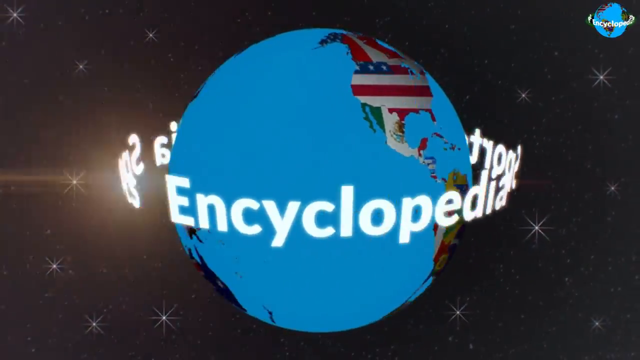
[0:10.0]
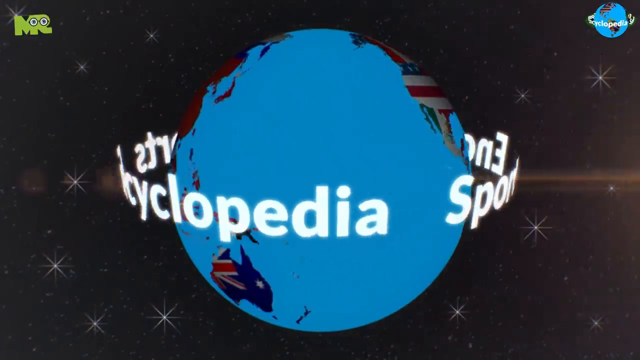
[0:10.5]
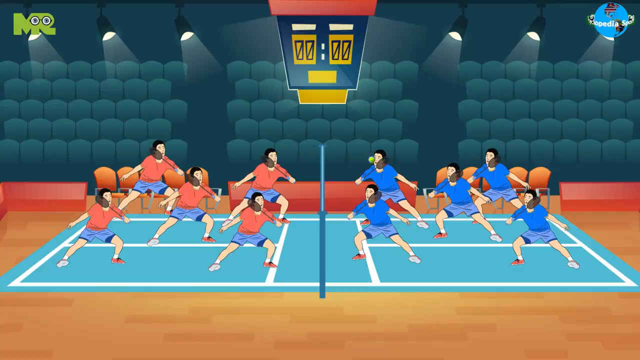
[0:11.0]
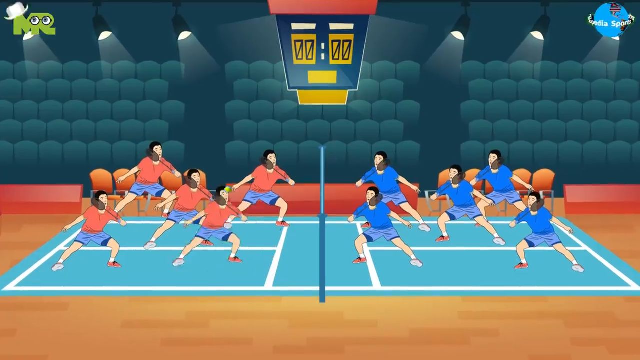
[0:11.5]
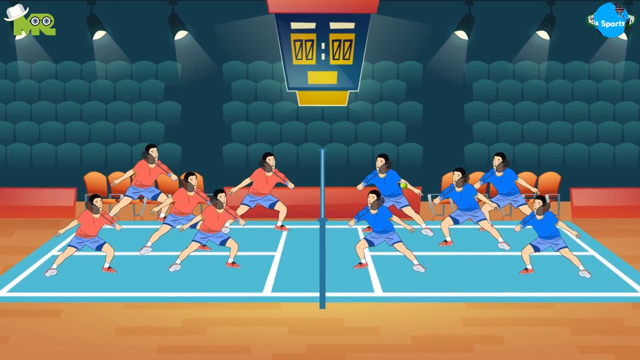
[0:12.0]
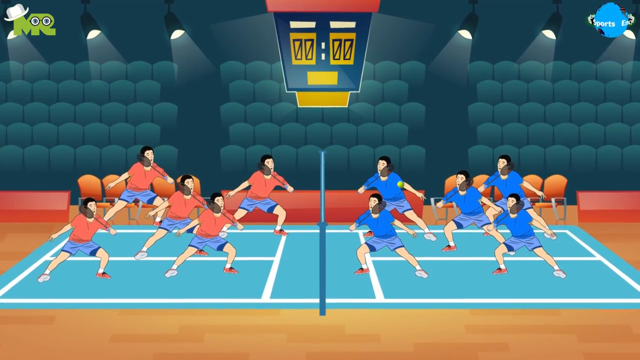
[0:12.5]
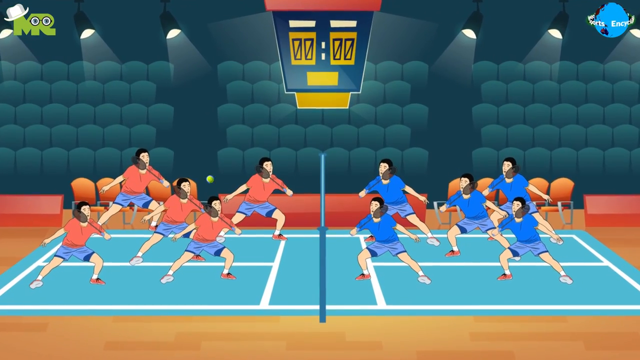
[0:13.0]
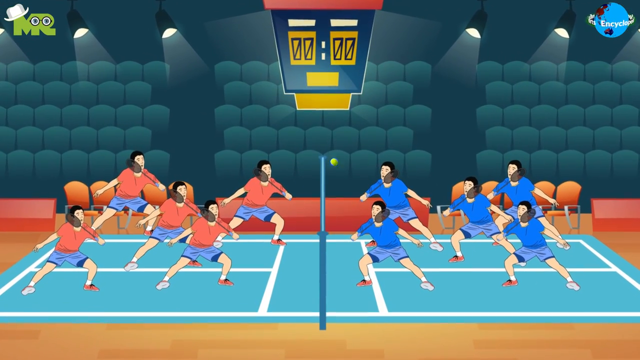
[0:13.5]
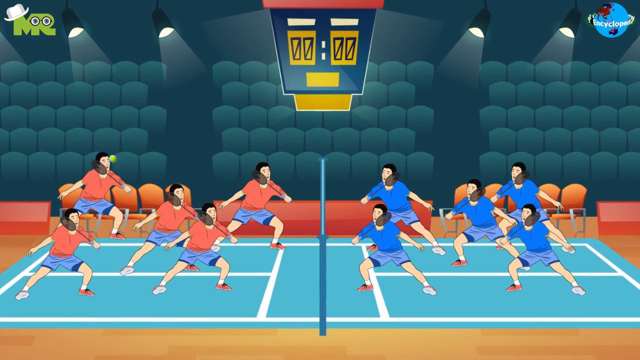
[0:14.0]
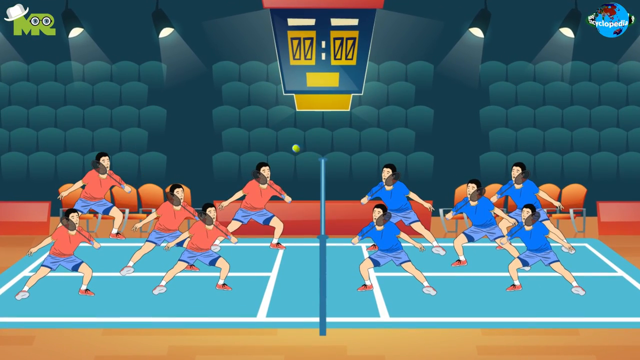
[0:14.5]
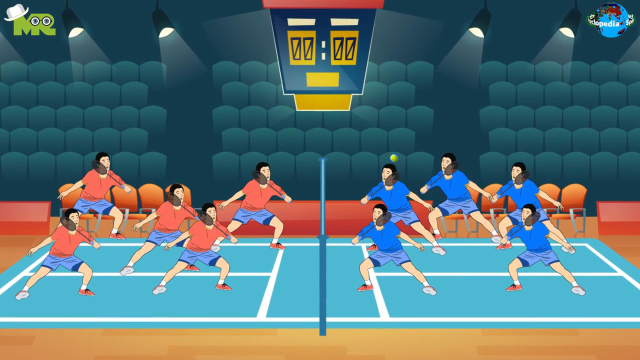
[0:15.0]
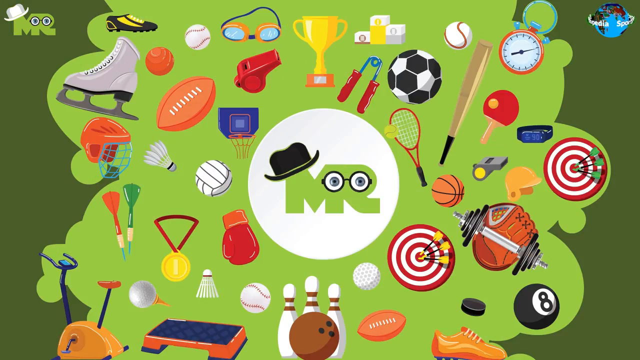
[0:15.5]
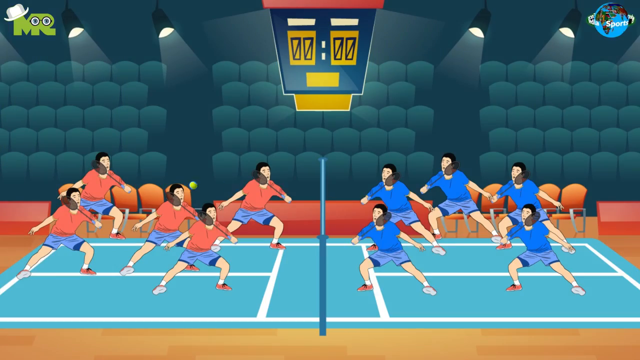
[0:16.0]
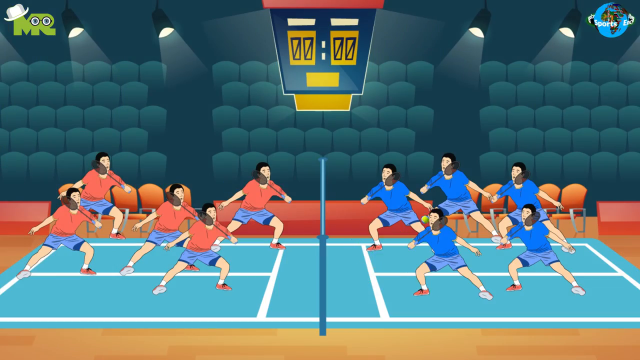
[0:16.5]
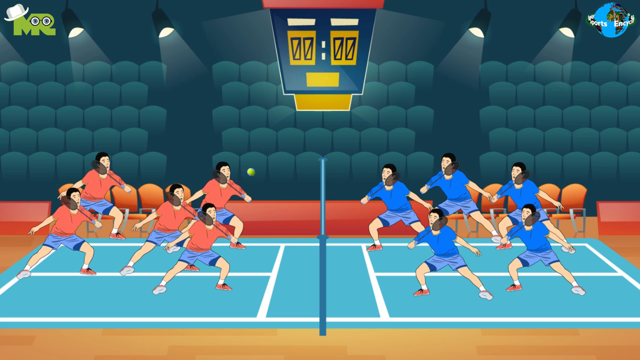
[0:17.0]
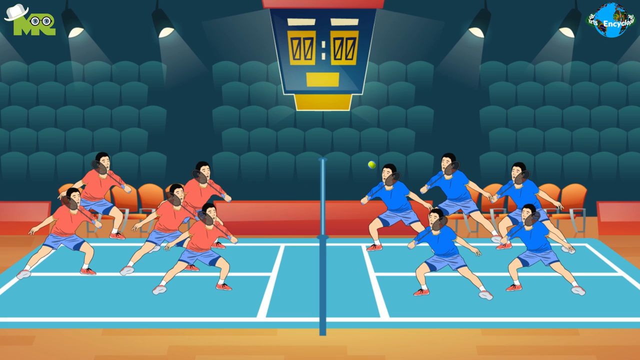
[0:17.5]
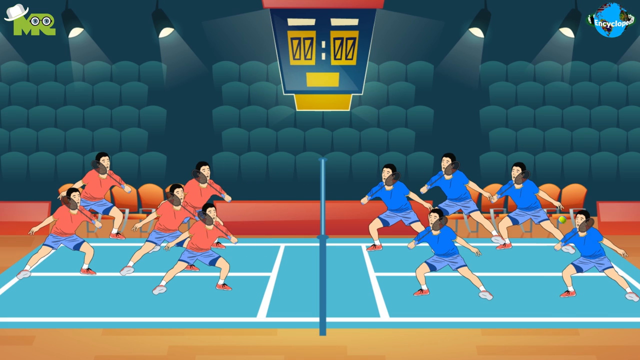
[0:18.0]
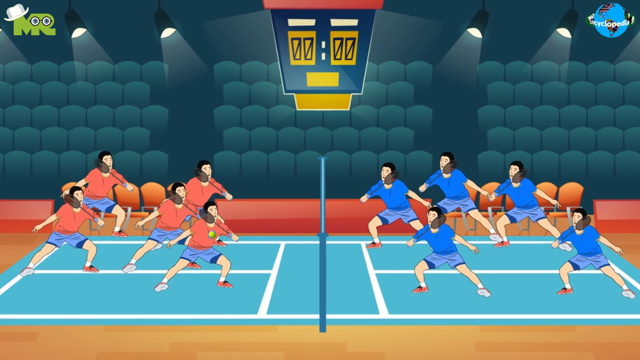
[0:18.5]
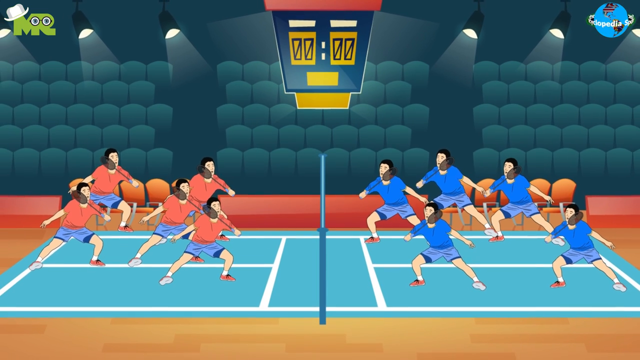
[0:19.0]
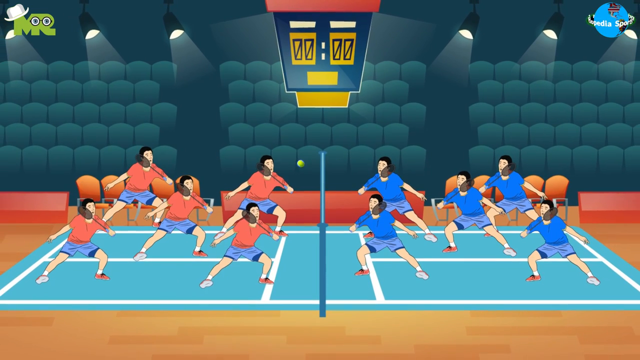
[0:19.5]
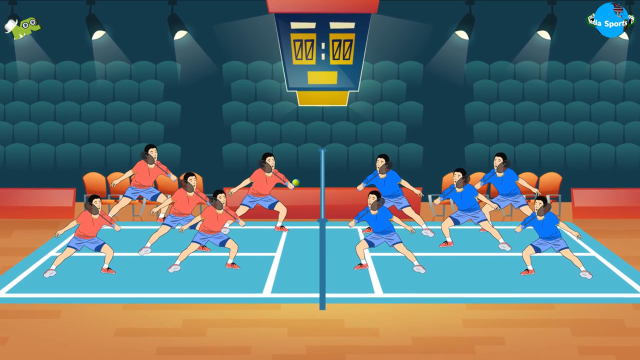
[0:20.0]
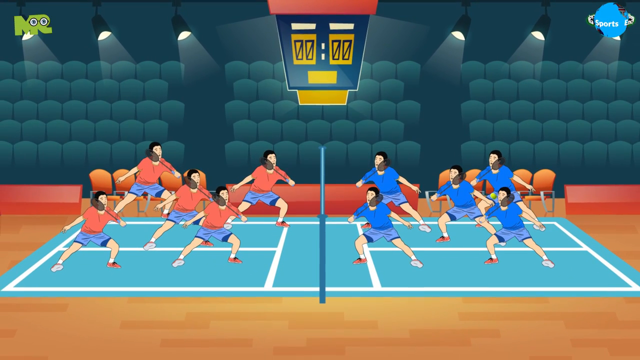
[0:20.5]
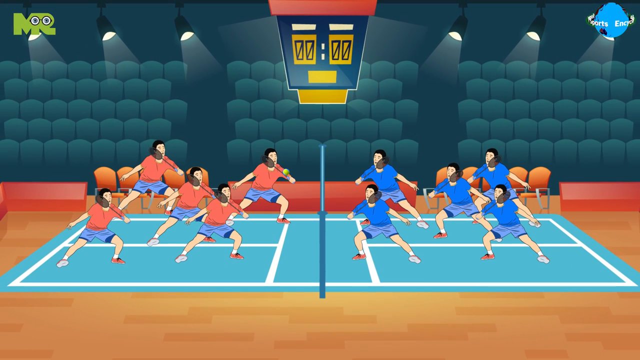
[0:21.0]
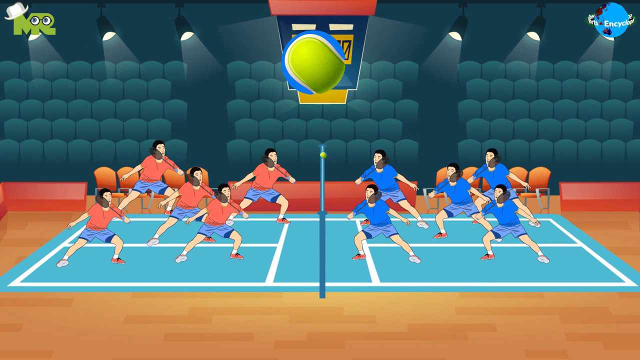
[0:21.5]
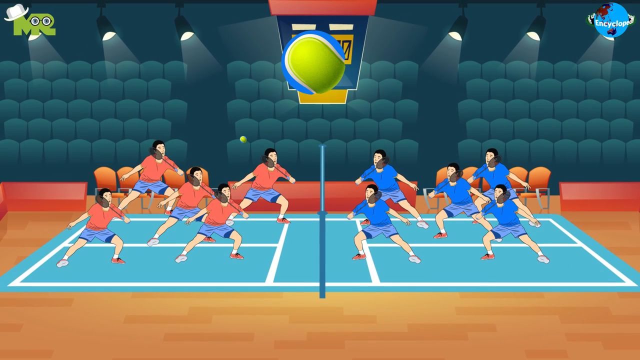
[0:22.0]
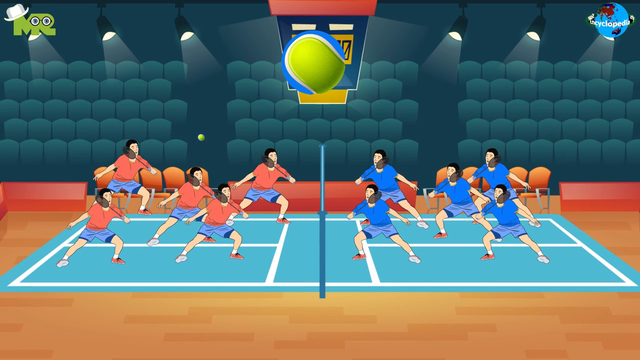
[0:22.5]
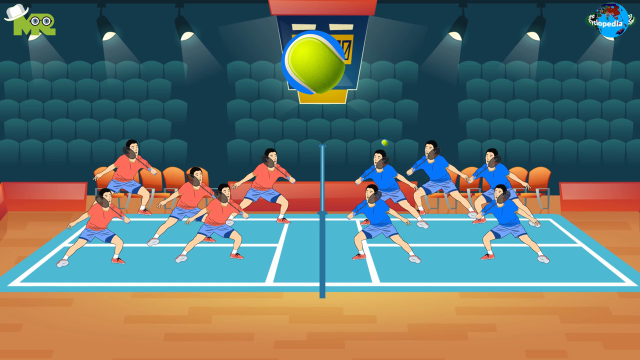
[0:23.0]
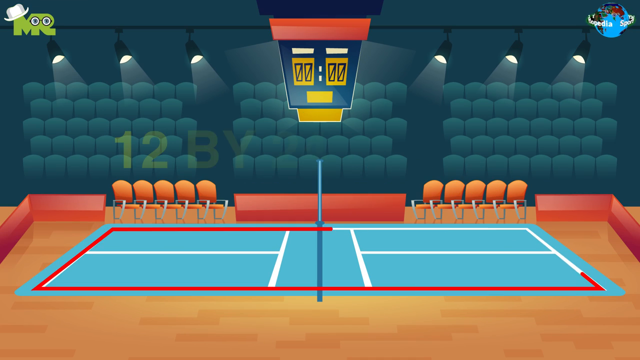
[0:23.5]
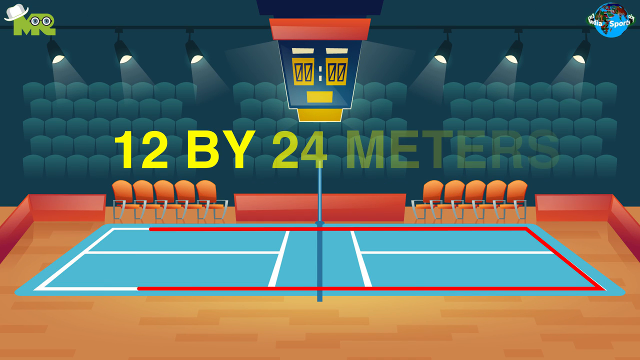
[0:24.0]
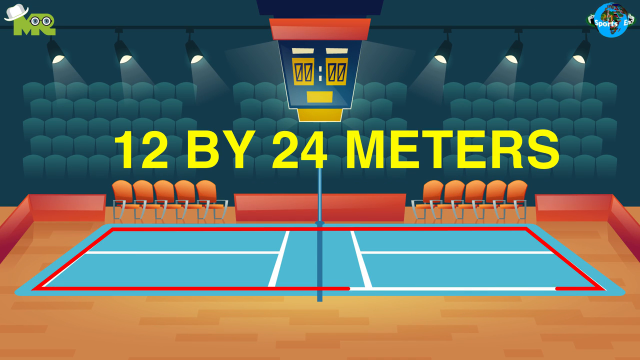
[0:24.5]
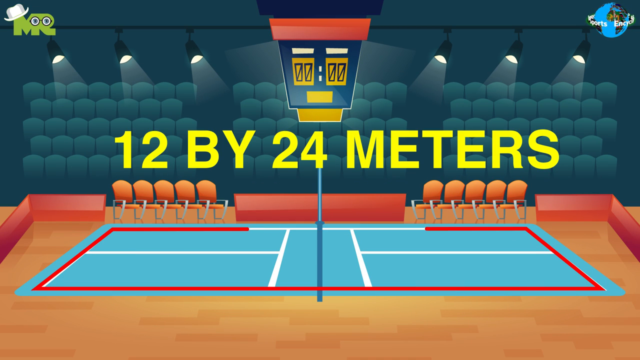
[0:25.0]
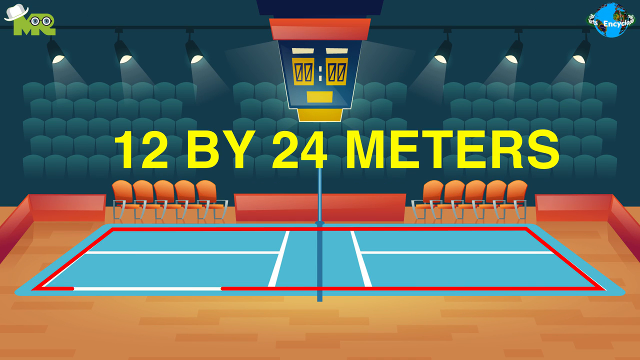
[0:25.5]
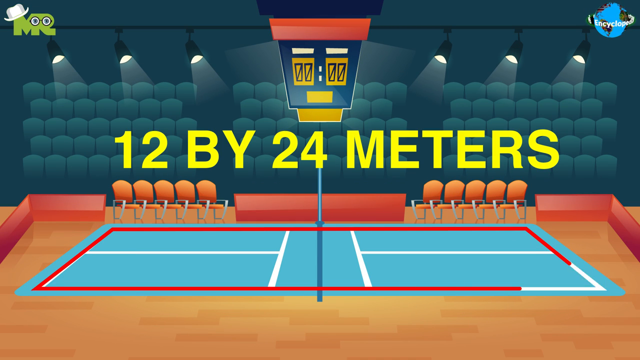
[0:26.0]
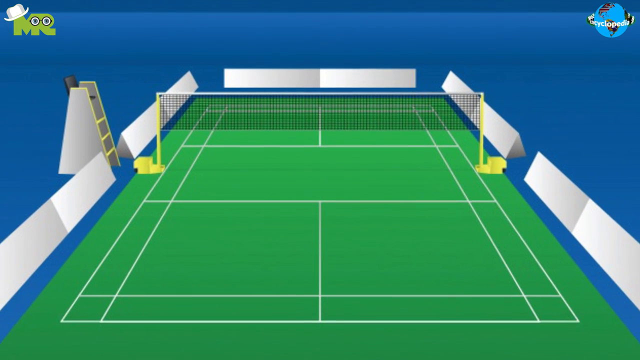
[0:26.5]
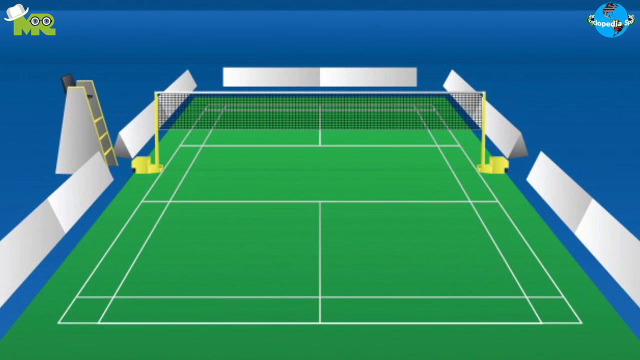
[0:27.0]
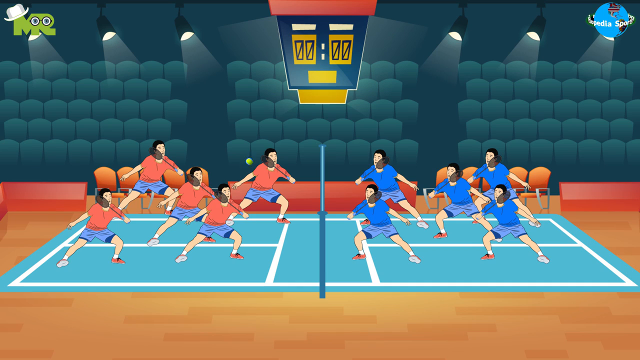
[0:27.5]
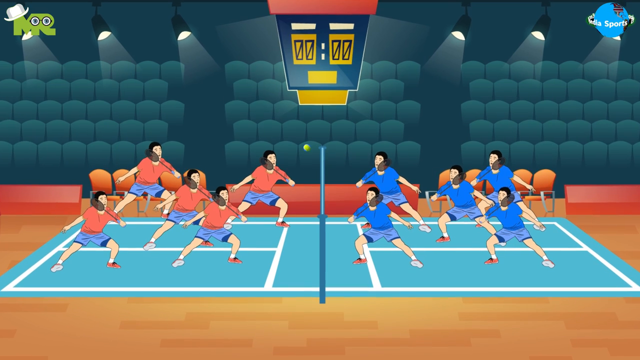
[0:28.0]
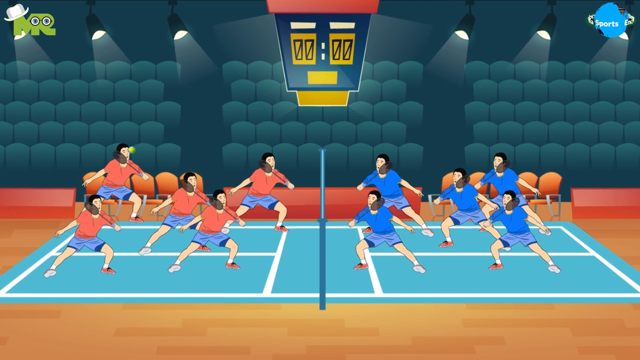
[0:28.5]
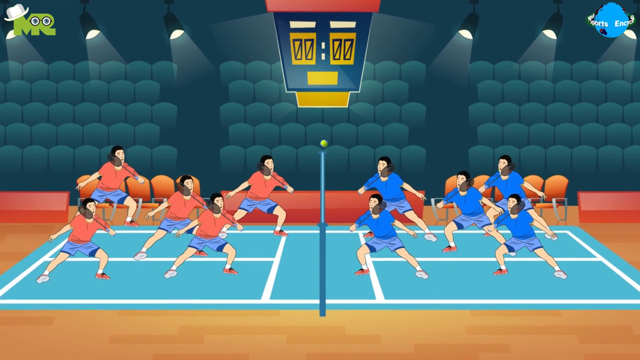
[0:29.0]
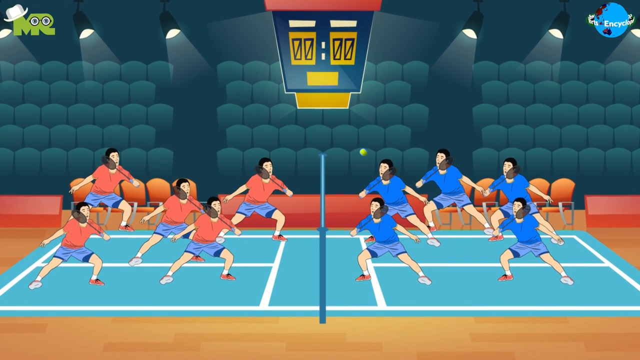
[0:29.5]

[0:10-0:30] A red team is on the left and a blue team is on the right in what looks like a tennis game with five people. The tennis ball travels straight across each side of the court rather than in an arc. The players do not actually move their bodies; they are simply placed in position, almost as if the images were dragged and dropped to where the ball is going as it is hit back and forth.